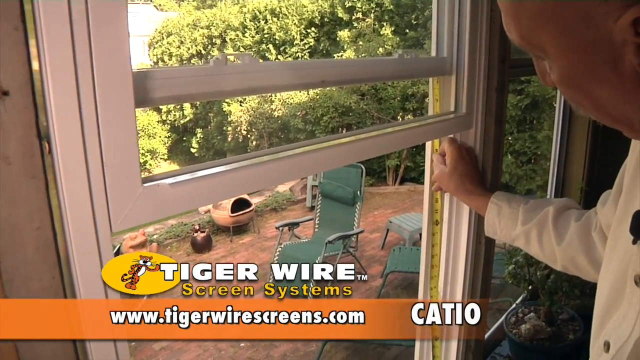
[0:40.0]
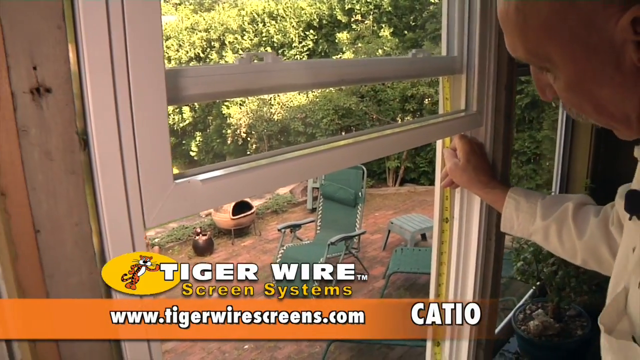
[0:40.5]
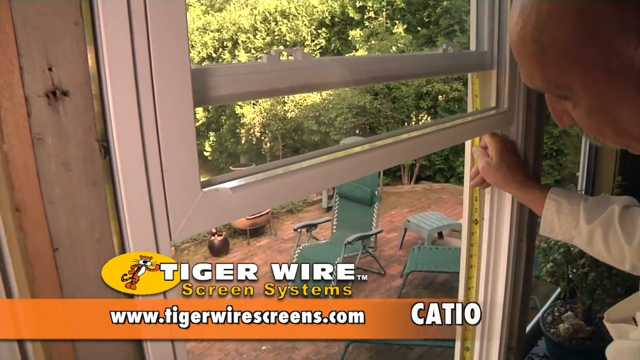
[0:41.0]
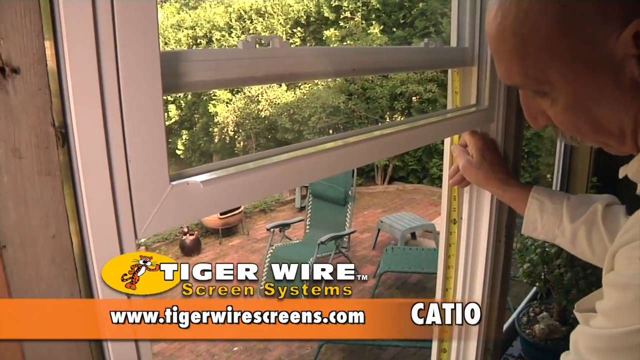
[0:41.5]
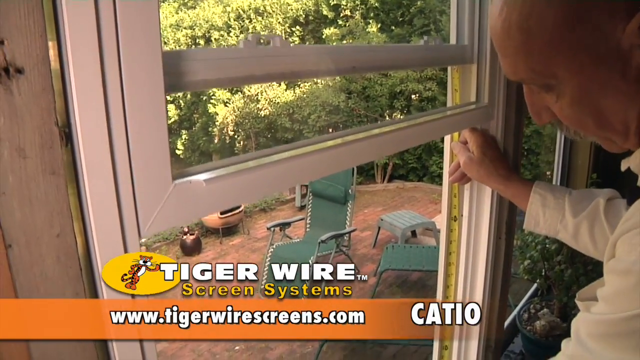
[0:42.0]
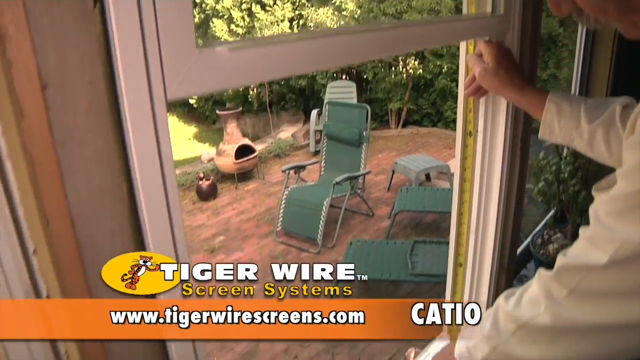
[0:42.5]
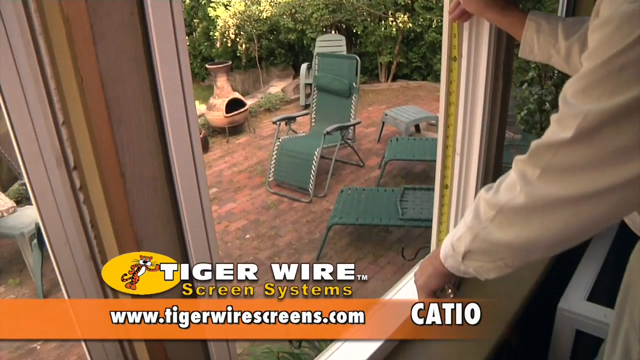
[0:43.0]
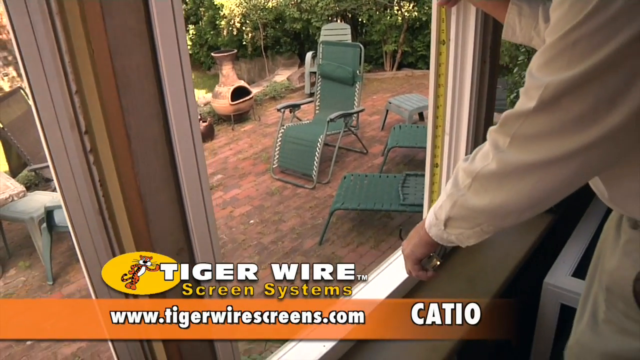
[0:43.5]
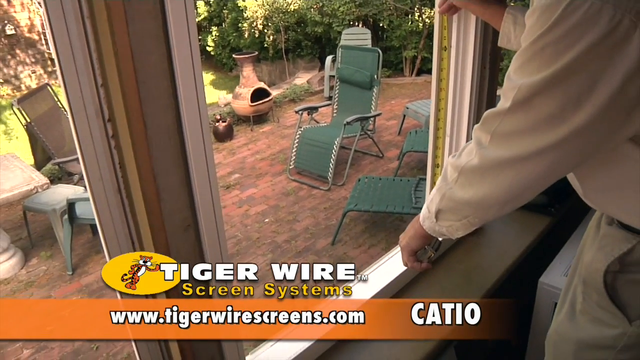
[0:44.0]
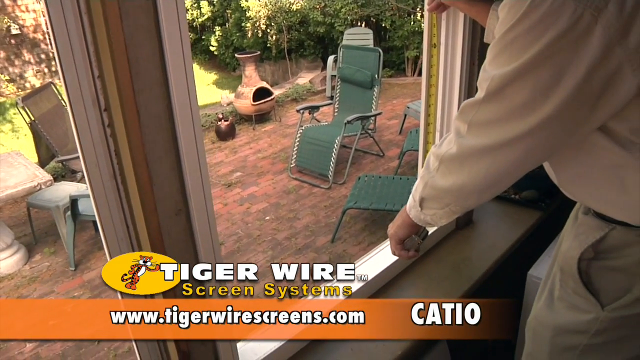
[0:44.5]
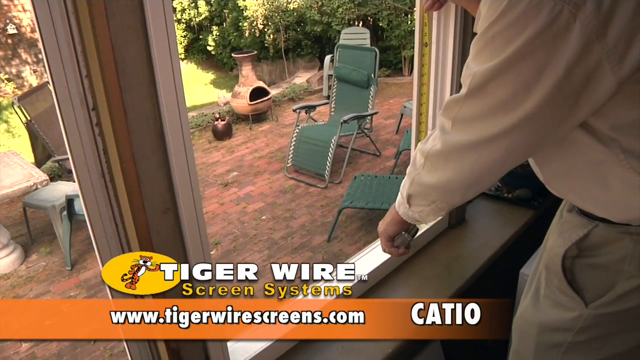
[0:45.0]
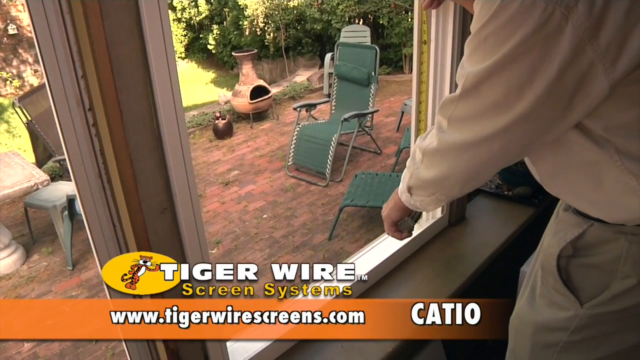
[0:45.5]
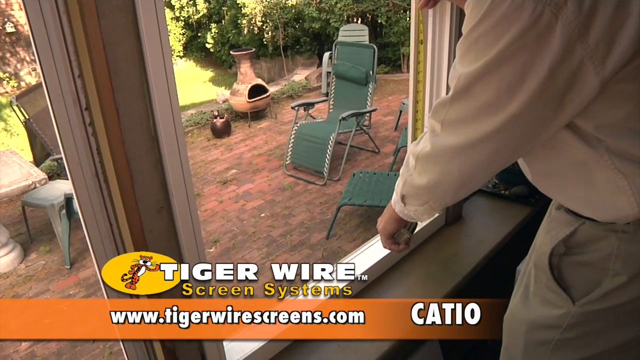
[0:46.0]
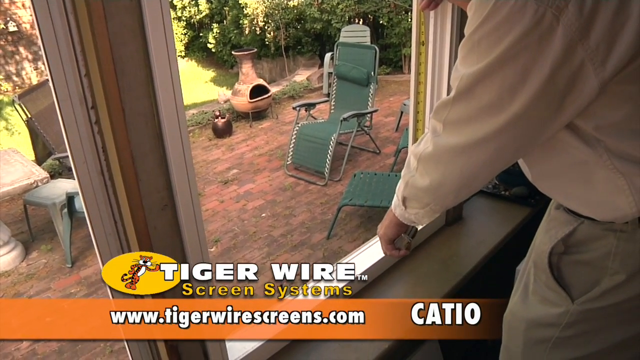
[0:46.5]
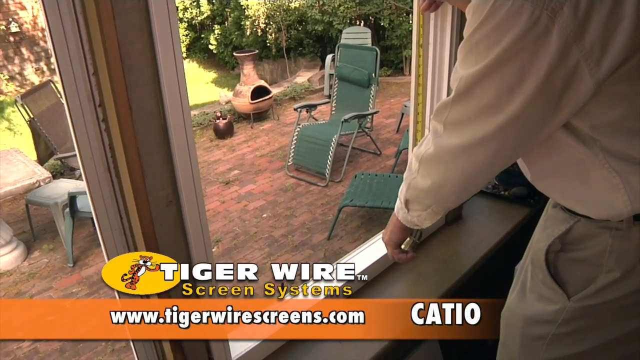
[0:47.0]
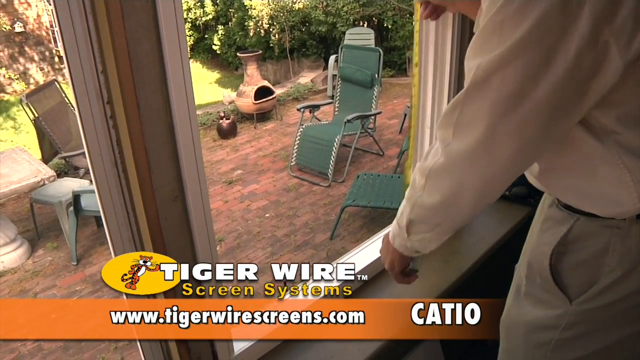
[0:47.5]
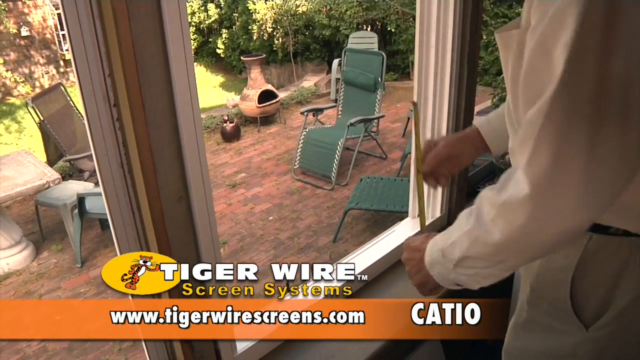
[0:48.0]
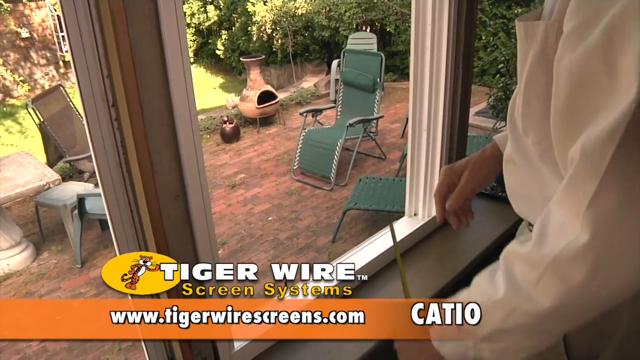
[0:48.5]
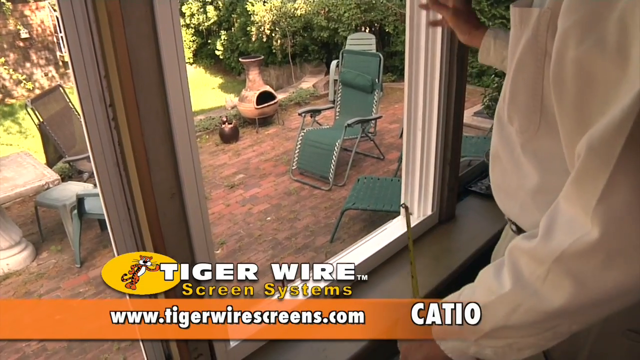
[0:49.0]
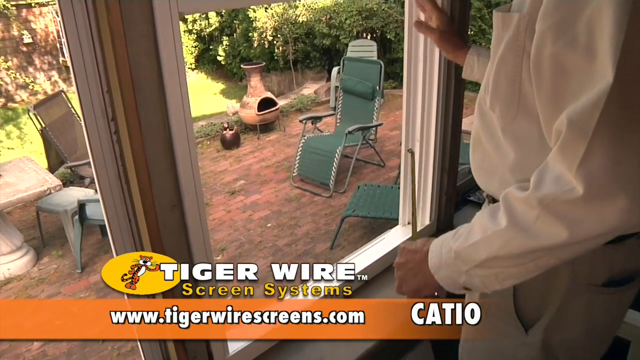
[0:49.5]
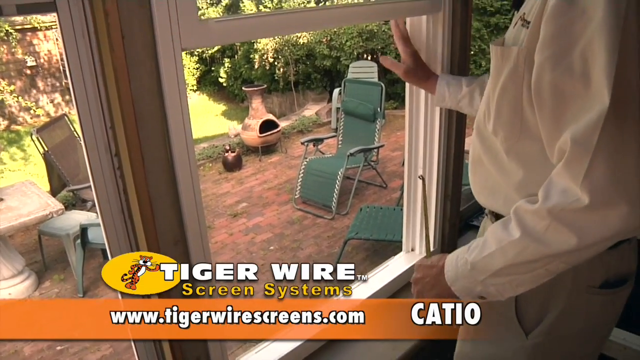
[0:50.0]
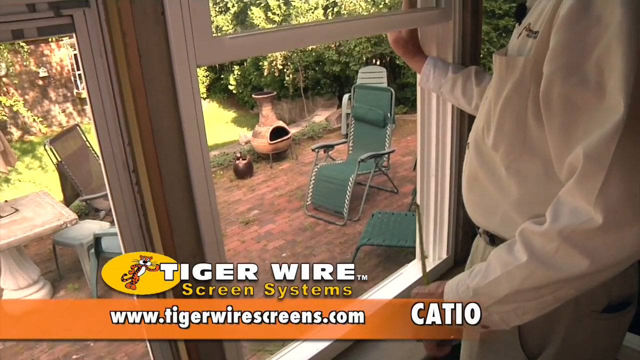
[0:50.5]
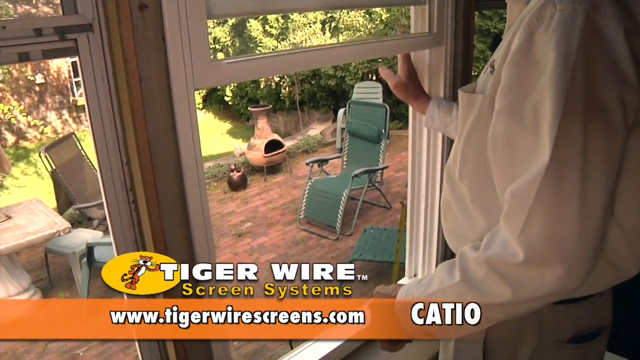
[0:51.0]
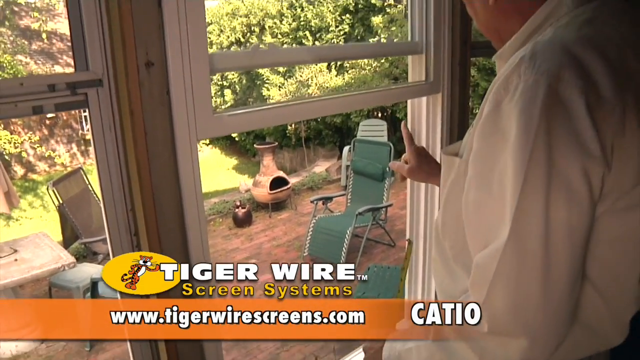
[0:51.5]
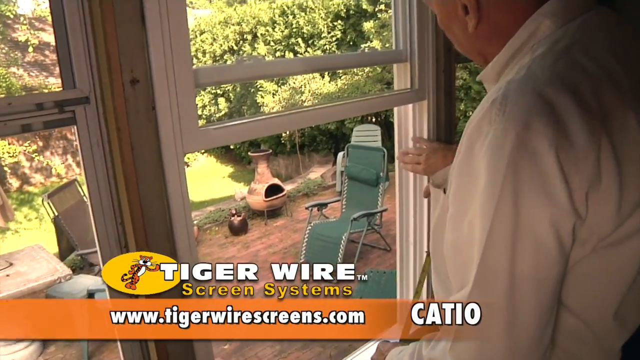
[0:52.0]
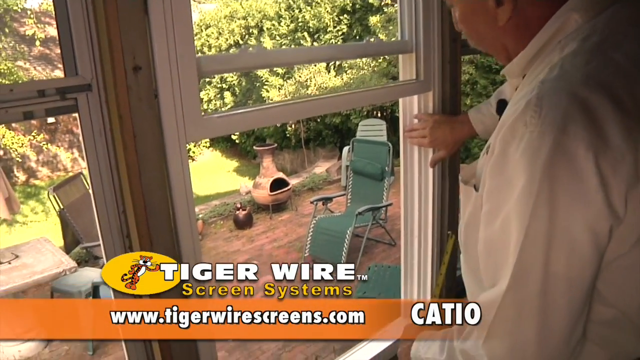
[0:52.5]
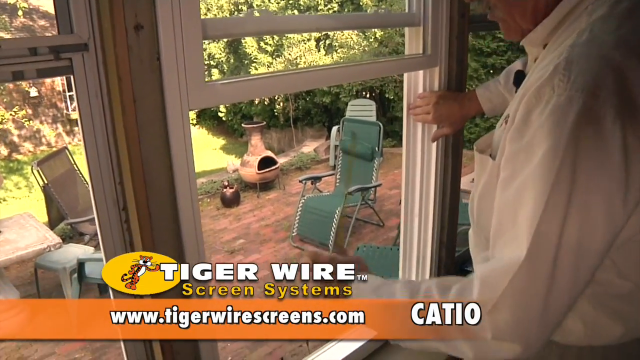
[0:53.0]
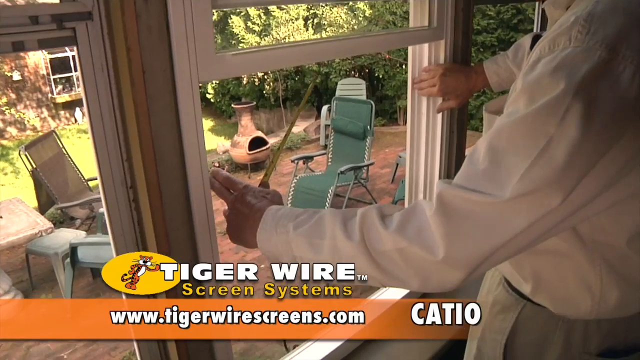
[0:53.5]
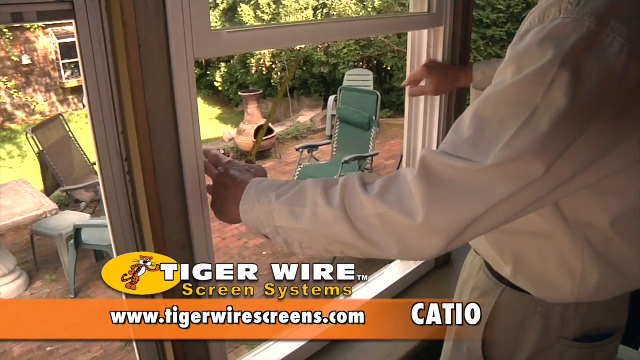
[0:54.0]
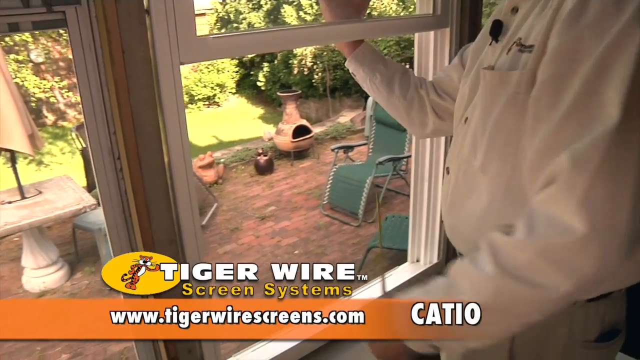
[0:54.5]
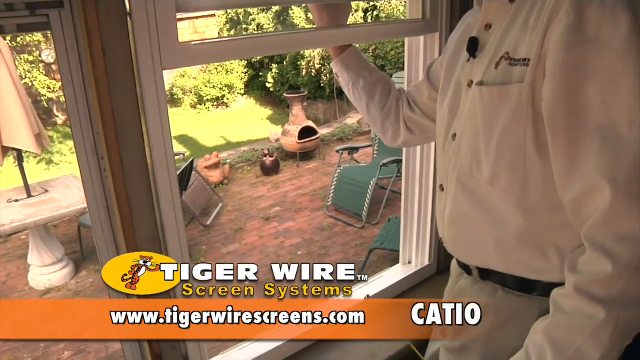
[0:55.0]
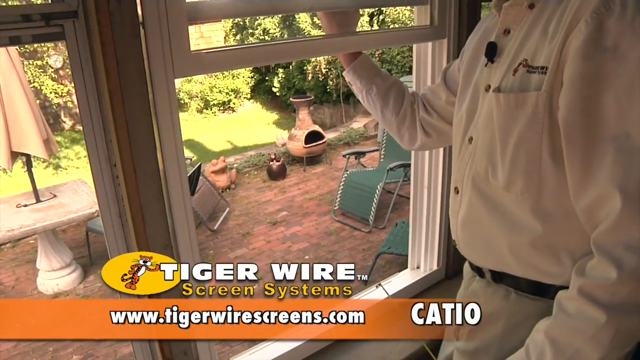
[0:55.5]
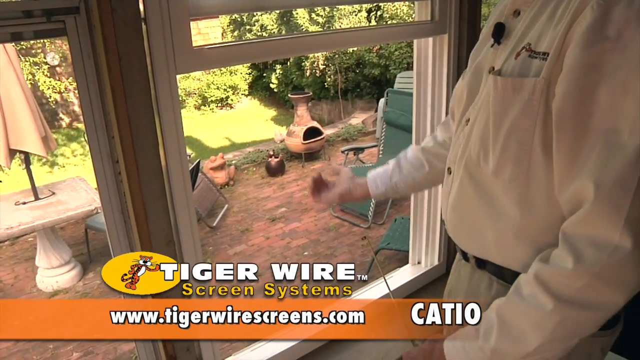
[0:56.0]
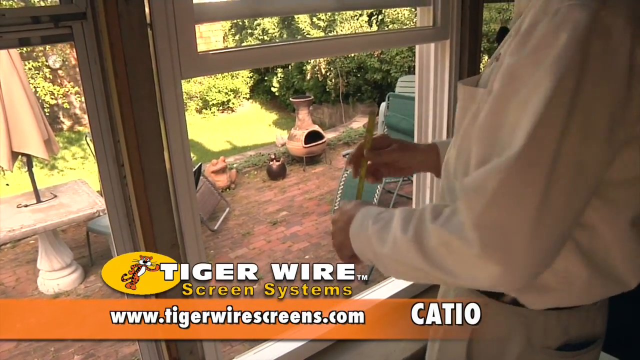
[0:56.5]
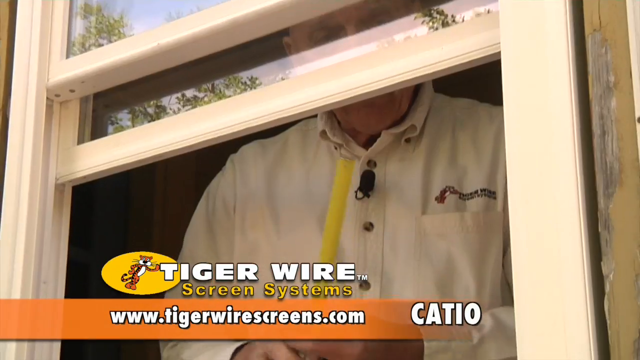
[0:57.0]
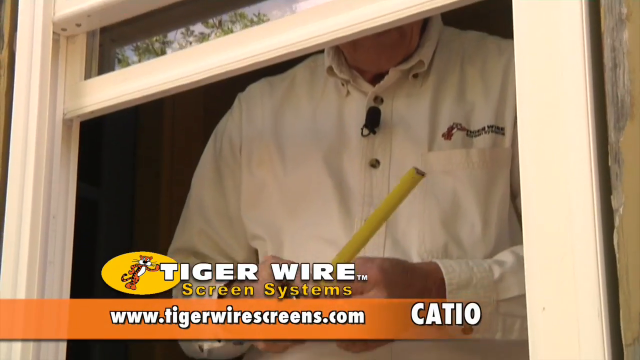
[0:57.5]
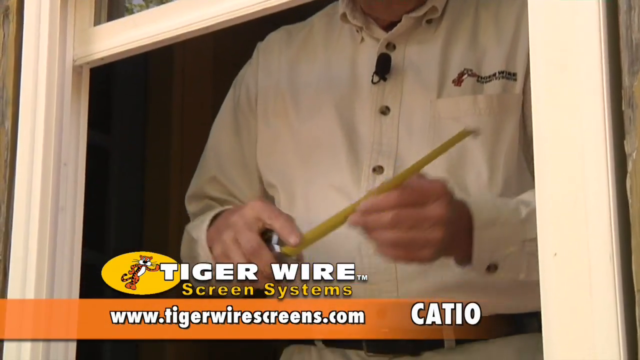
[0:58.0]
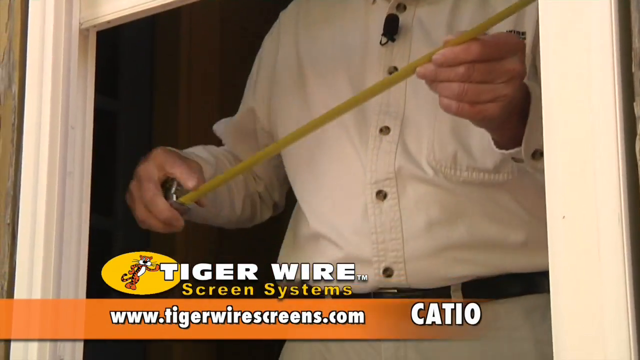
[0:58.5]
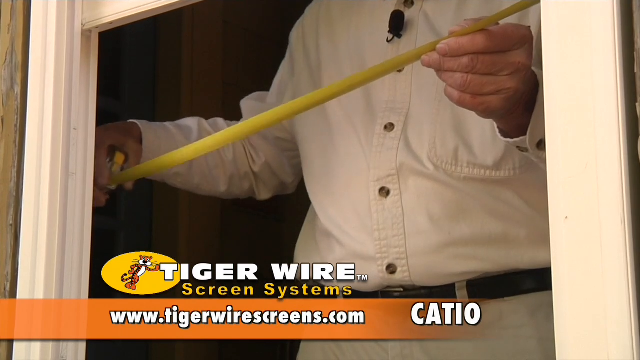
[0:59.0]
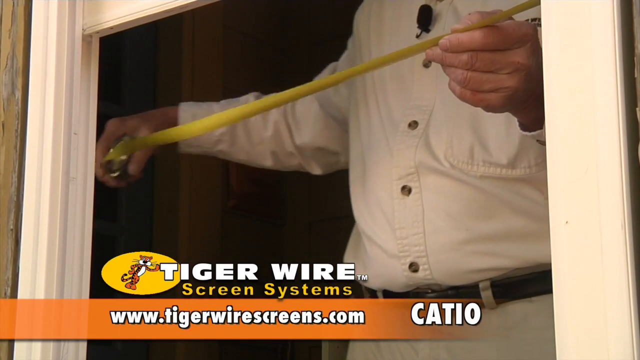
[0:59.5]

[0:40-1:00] A man measures inside a window frame, with one end of the tape measure at the top of the frame and the other end at the bottom. He stands inside the home with his hand on the outside of the window, and the measurement is taken from the bottom of the window frame to the bottom of the window sill. He then measures crosswise, stretching the tape measure horizontally from one side of the window frame to the other. The Tiger Wire screen systems website link, www.tigerwirescreens.com, is shown. Outside the window is a backyard with green lawn chairs and what looks like a small fire pit; something on the ground looks like a sitting cat but appears to be a jug used as a yard decoration.